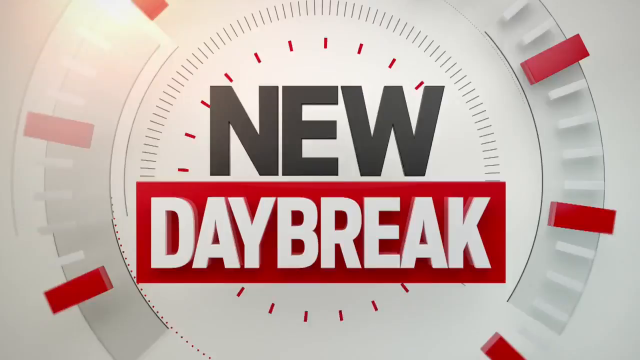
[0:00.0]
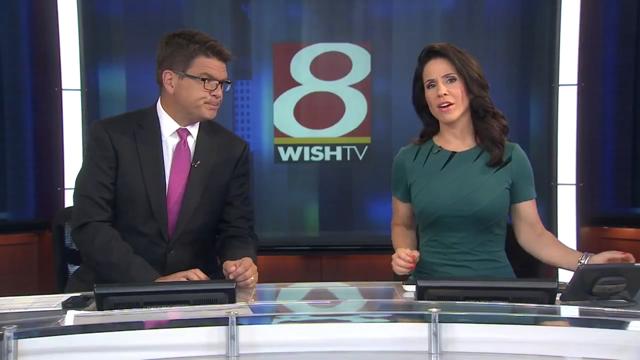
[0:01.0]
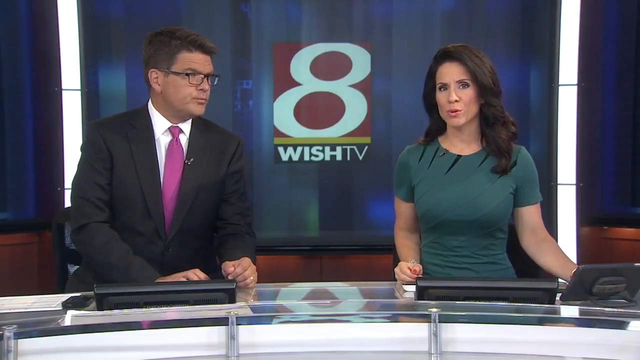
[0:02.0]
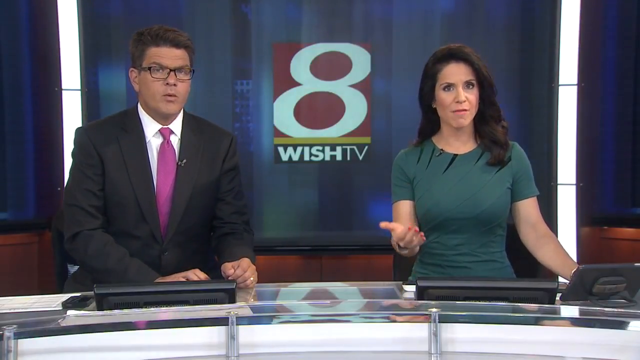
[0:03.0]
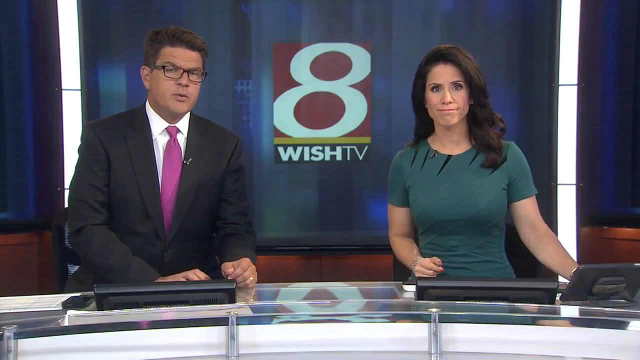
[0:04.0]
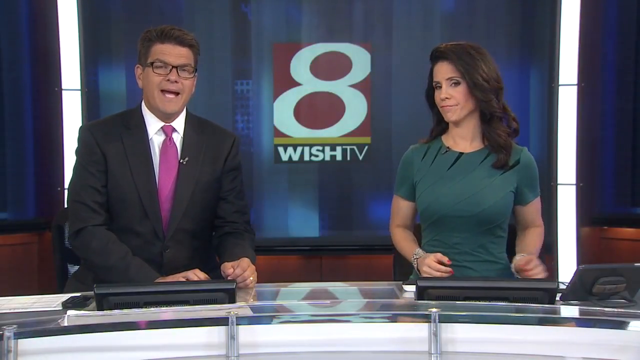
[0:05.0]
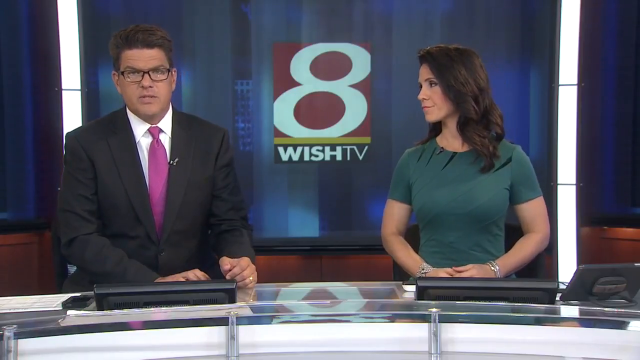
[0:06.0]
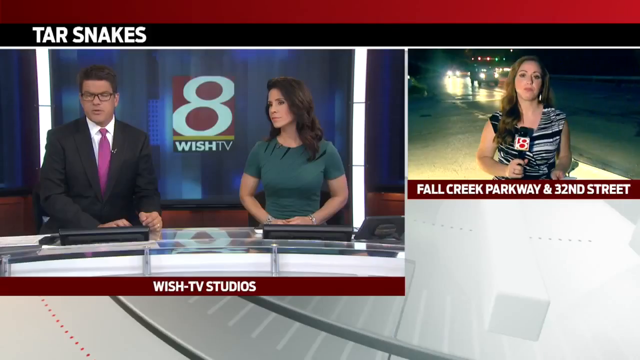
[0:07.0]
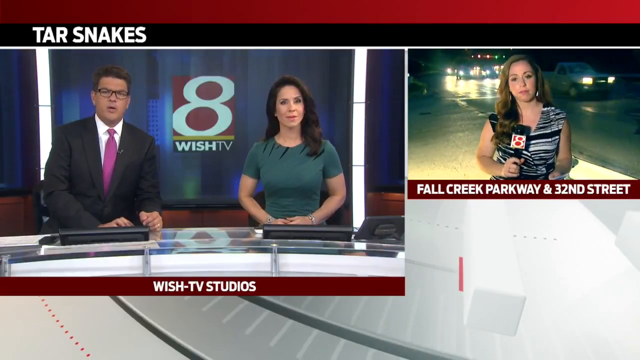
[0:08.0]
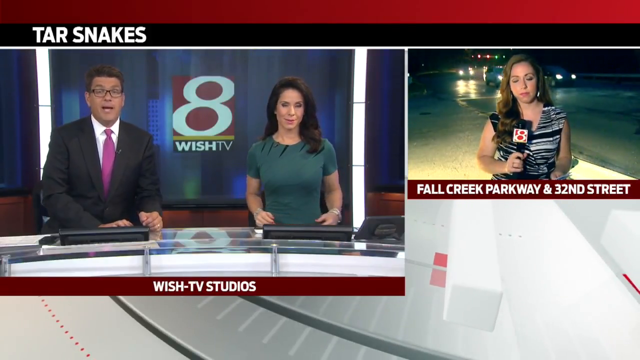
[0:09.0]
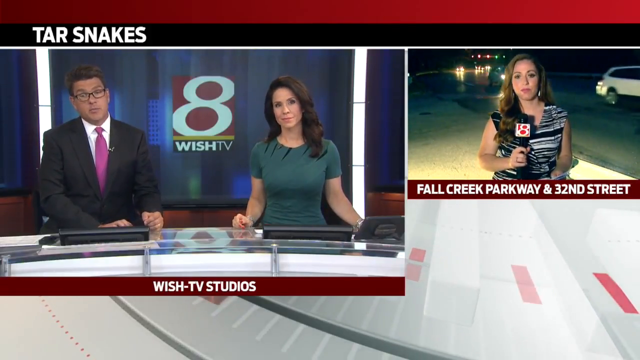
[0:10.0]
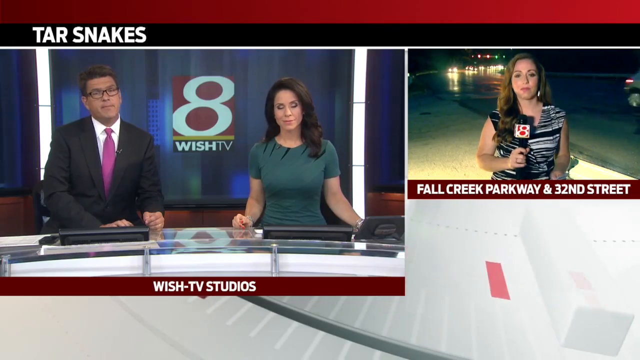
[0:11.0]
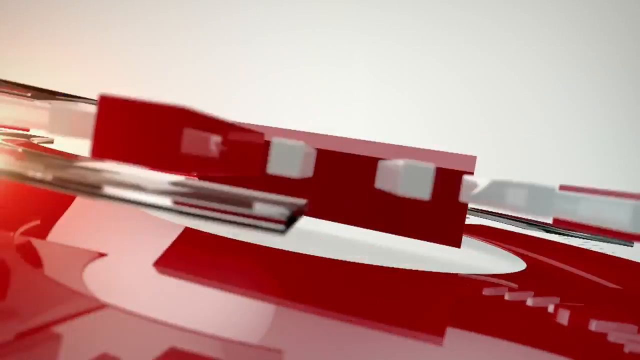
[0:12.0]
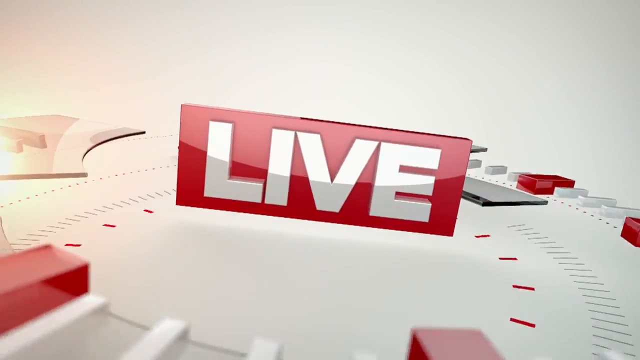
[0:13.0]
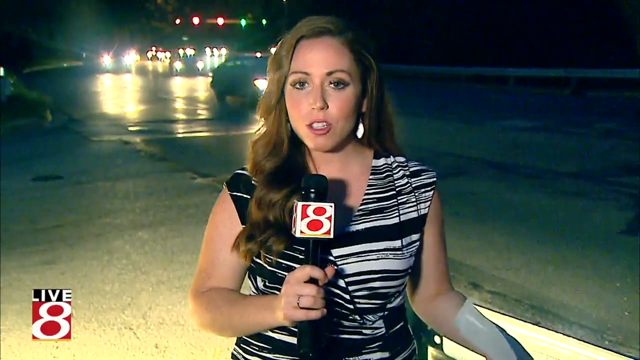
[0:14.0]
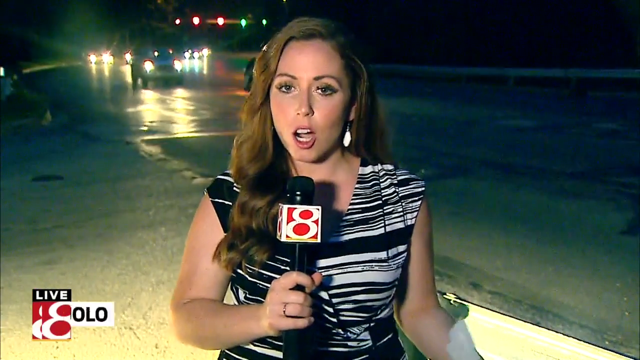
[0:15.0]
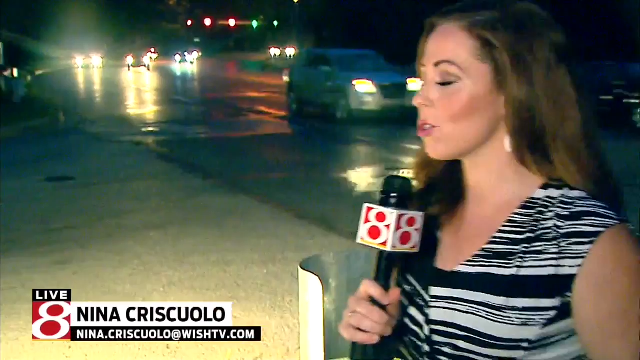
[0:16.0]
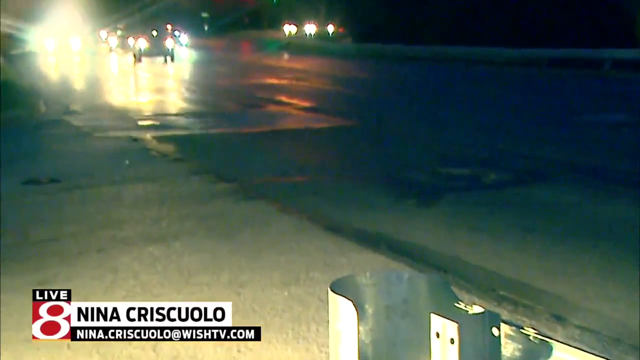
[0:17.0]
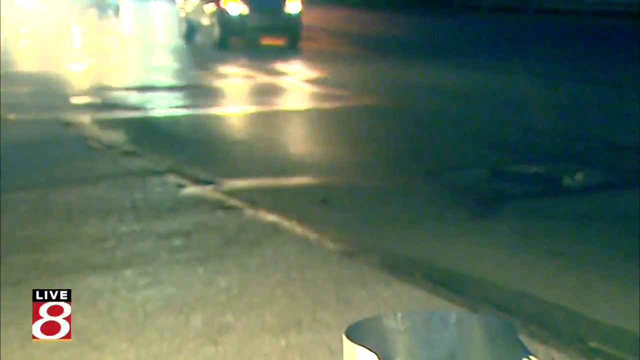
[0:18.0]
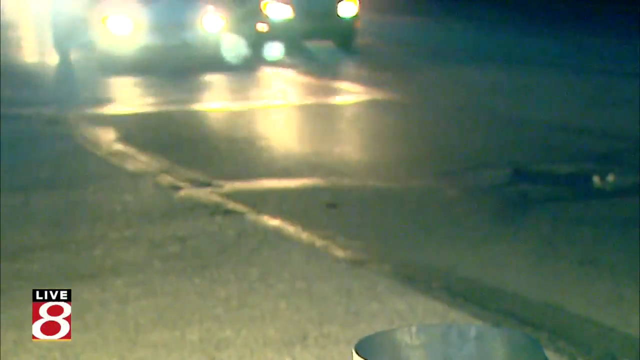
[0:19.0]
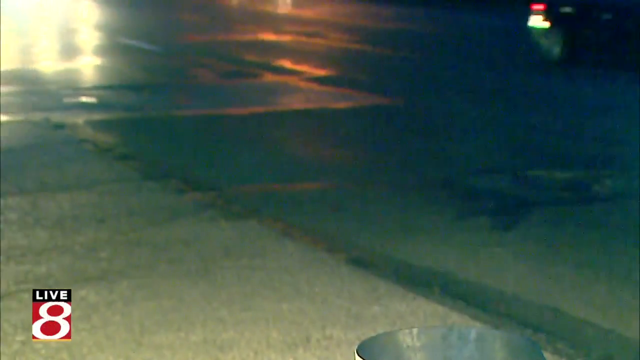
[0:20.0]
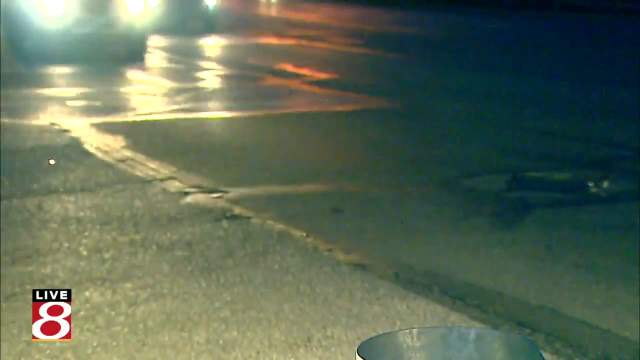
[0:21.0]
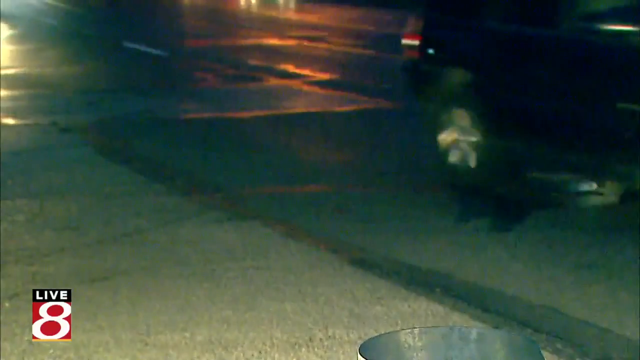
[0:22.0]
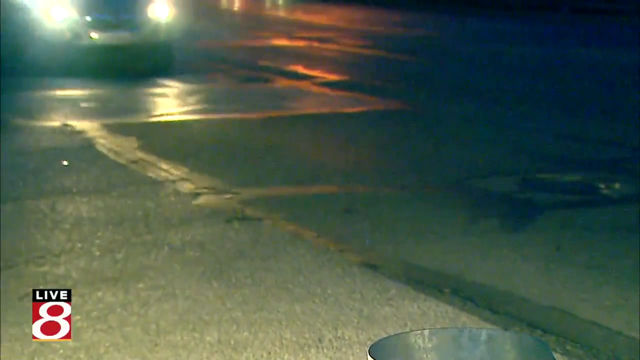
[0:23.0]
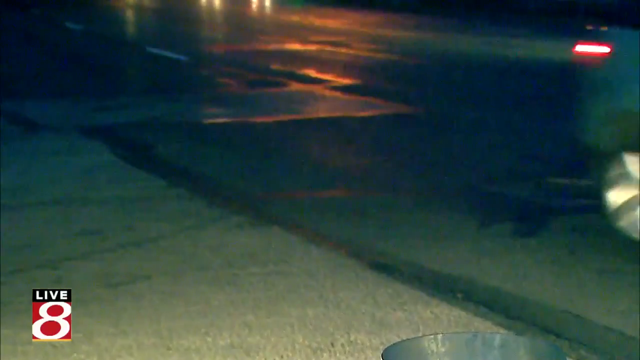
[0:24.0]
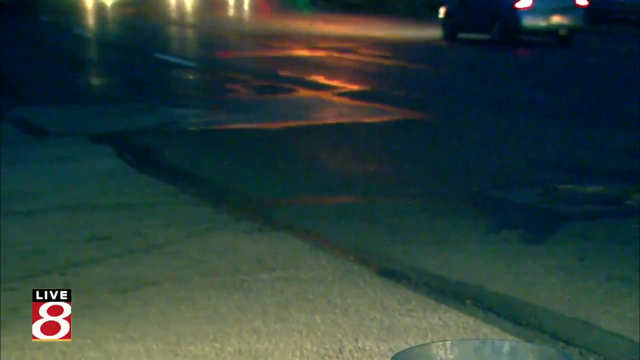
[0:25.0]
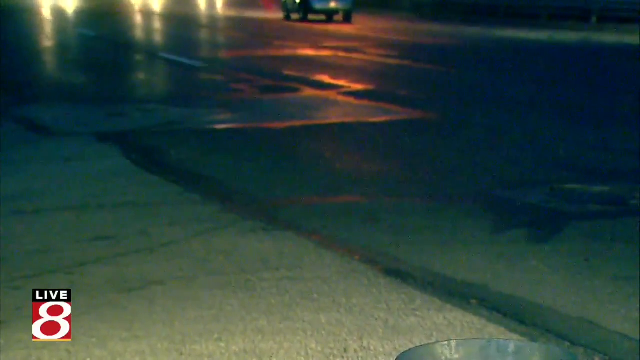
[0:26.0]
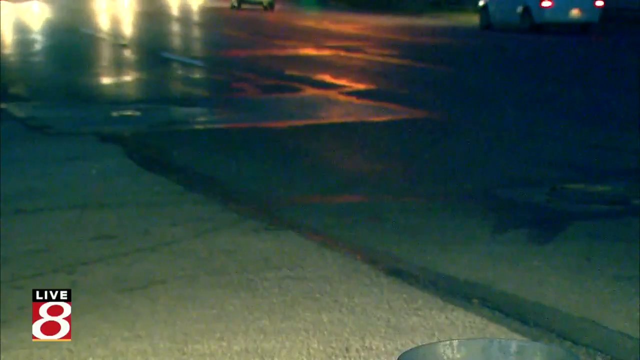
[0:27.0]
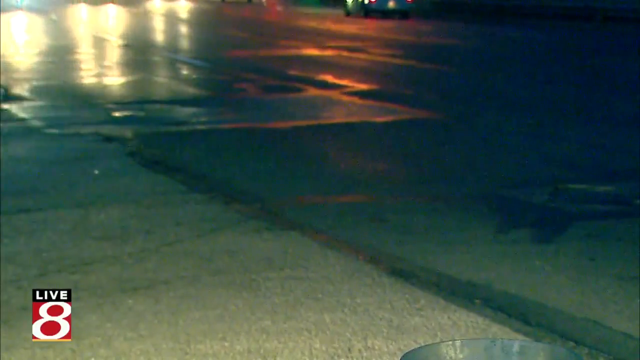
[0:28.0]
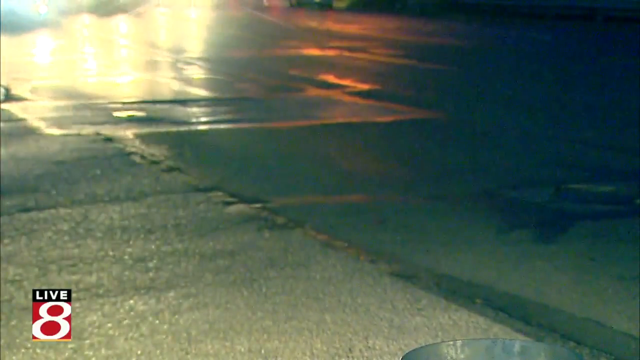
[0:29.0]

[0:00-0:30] The video opens with the title "new daybreak," with "new" in bold black letters and "daybreak" in bold white letters on a red background. The branding shows this is Wish TV Channel 8. On the left is a man in a dark suit, pink tie, white shirt and glasses, in his mid to late 40s; on the right is a woman with dark hair, in her mid 40s, wearing a green blouse. To their right the screen reads "Fall Creek Parkway and 32nd Street." A woman reporting on location appears with the word "live." She is probably in her early 30s and wears a black and white striped dress. She has the 8 microphone, her name is Nina, and her email is nina.kriskulo@wishtv.com. The camera pans out into the streets as traffic comes, and cars travel over and around a manhole.